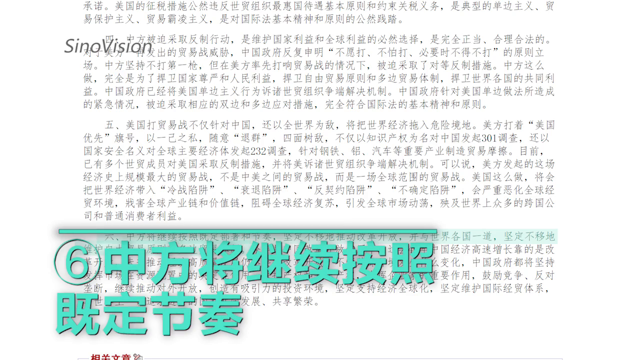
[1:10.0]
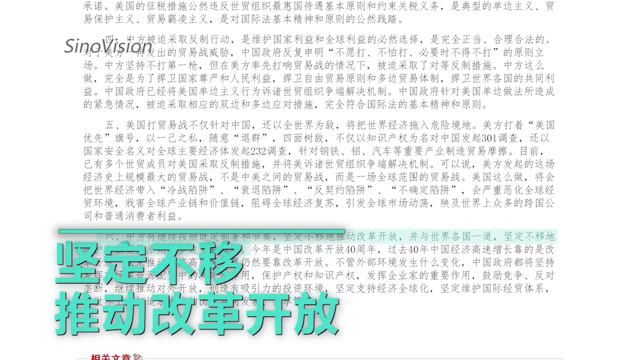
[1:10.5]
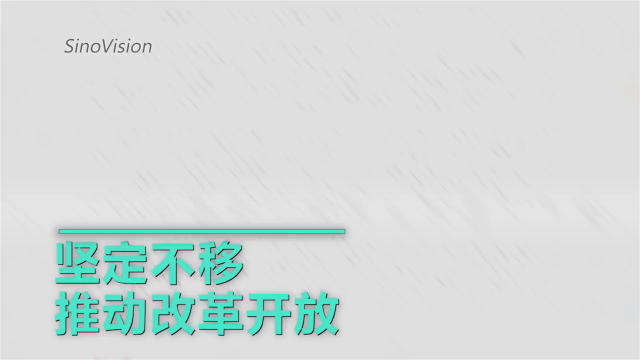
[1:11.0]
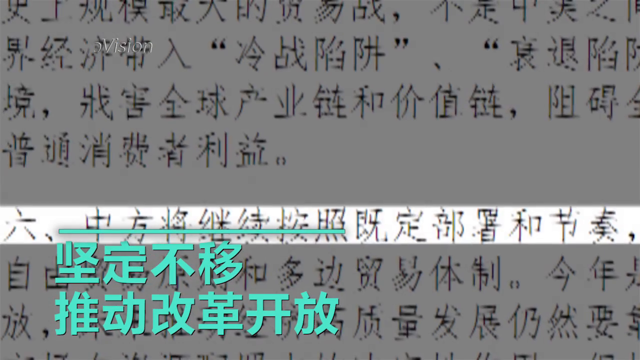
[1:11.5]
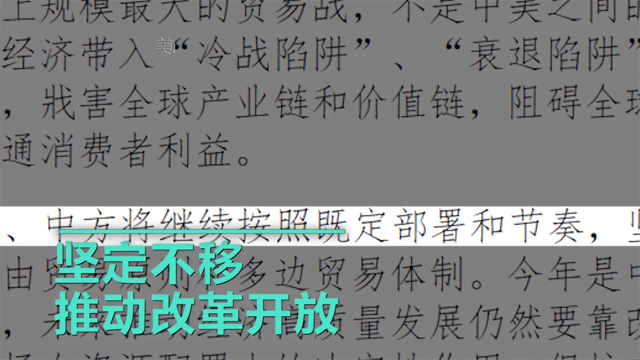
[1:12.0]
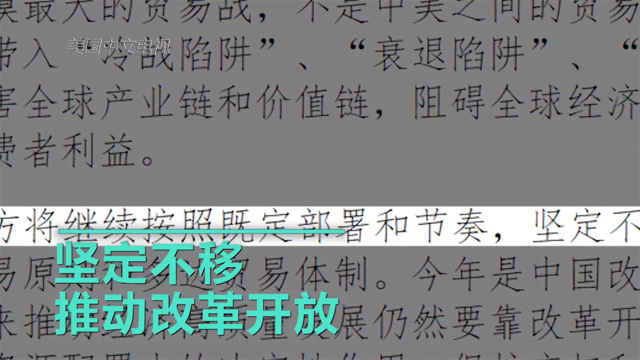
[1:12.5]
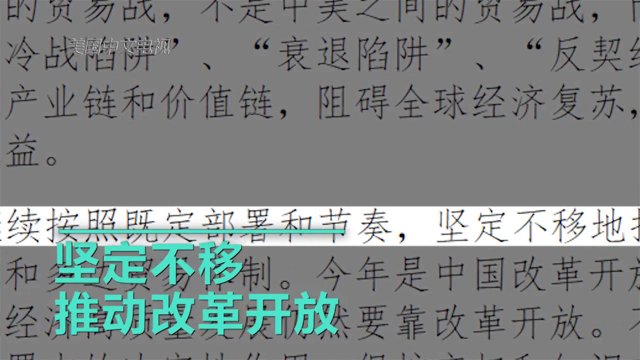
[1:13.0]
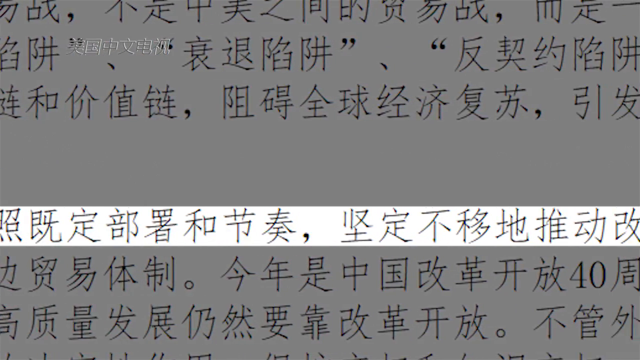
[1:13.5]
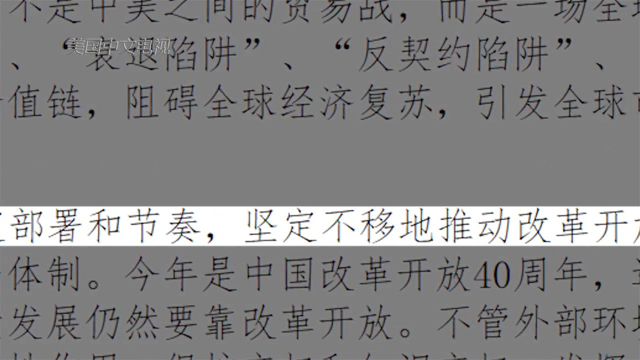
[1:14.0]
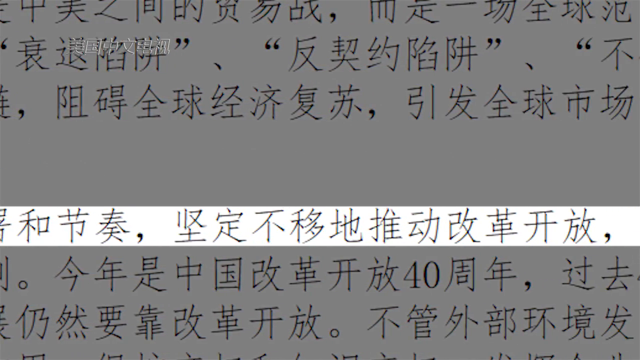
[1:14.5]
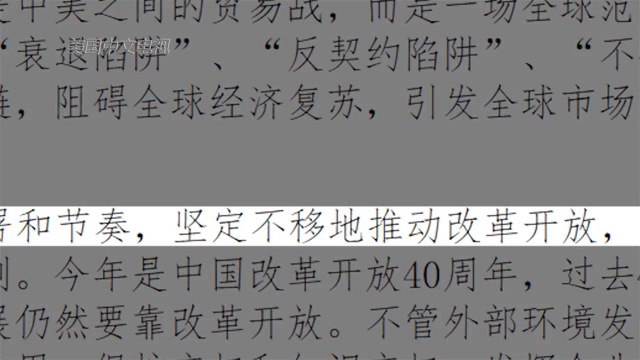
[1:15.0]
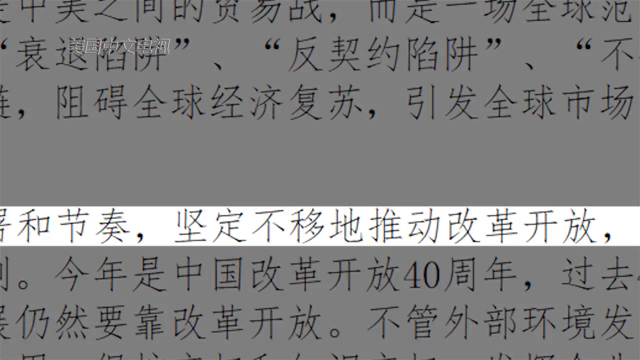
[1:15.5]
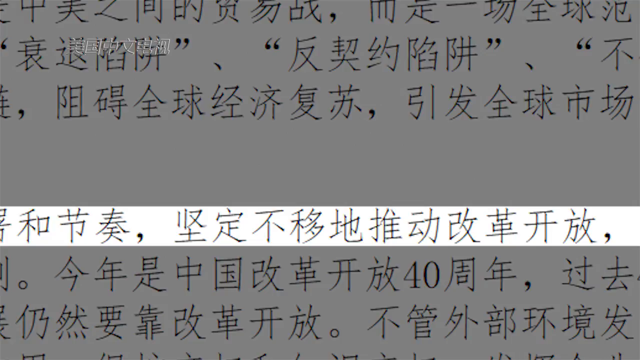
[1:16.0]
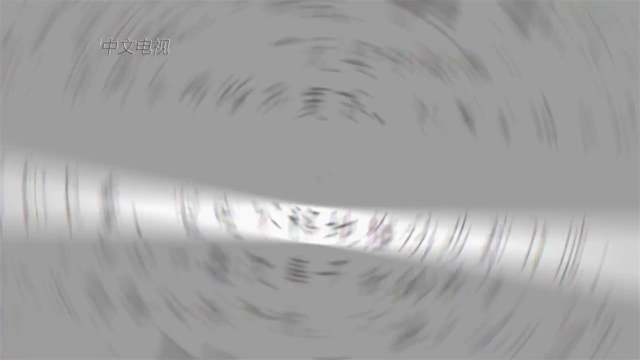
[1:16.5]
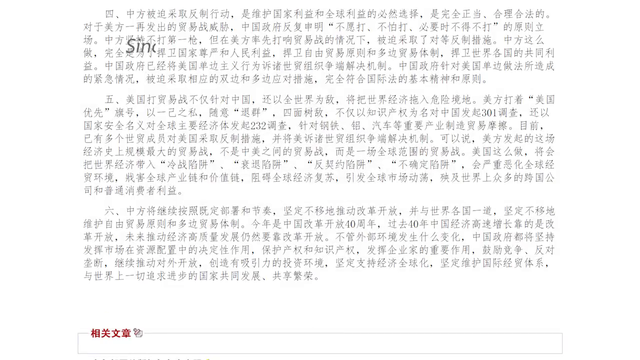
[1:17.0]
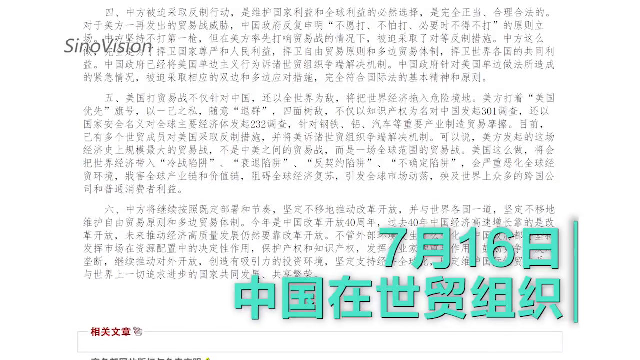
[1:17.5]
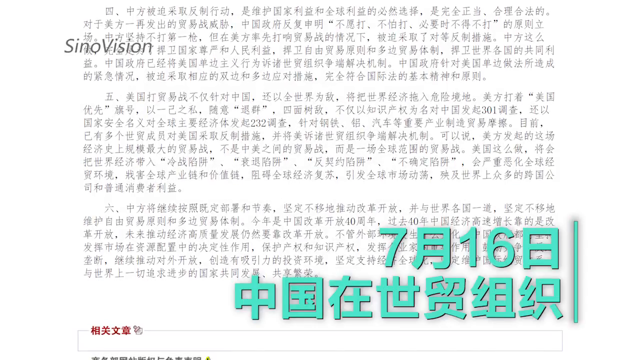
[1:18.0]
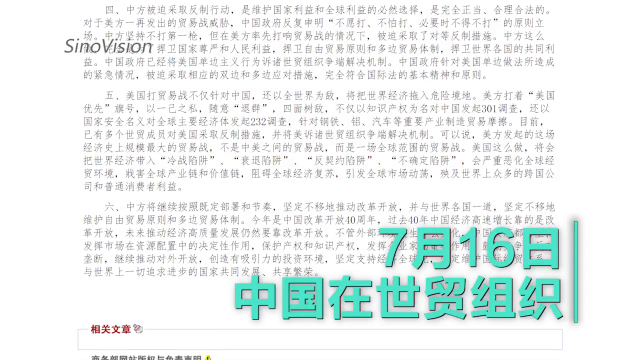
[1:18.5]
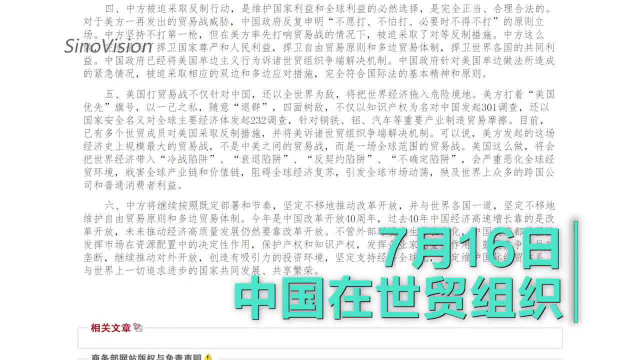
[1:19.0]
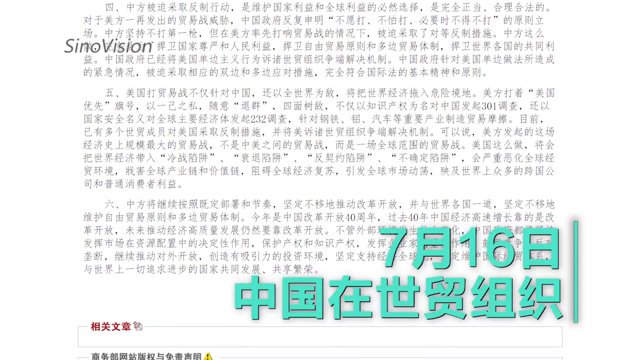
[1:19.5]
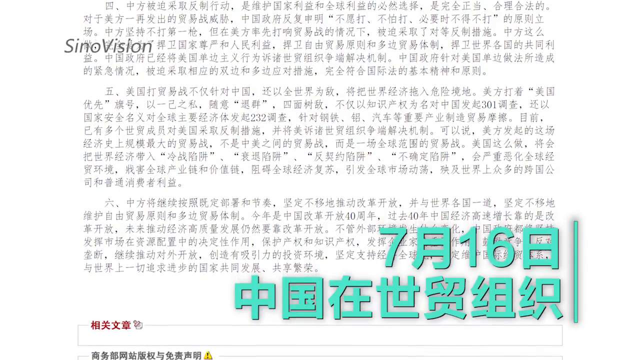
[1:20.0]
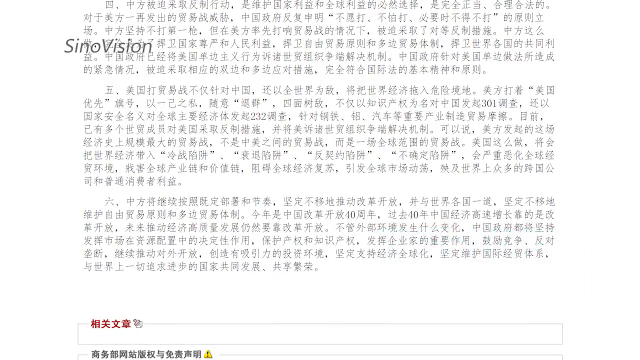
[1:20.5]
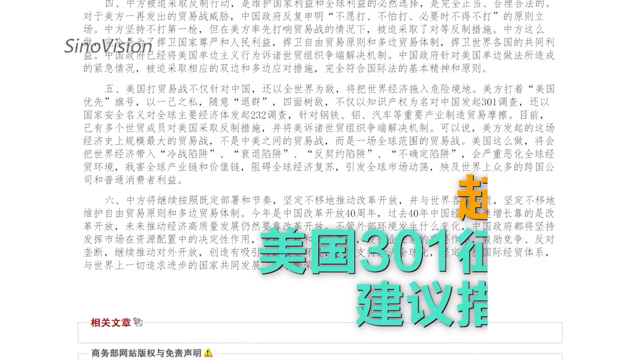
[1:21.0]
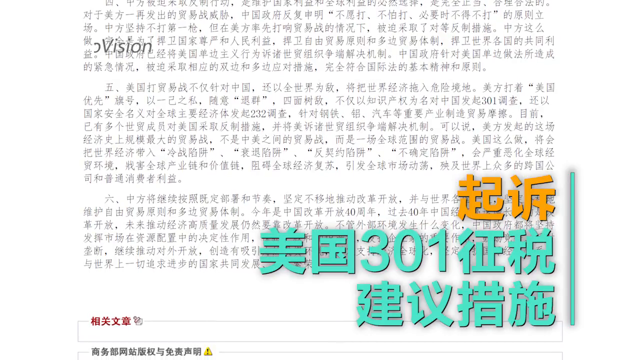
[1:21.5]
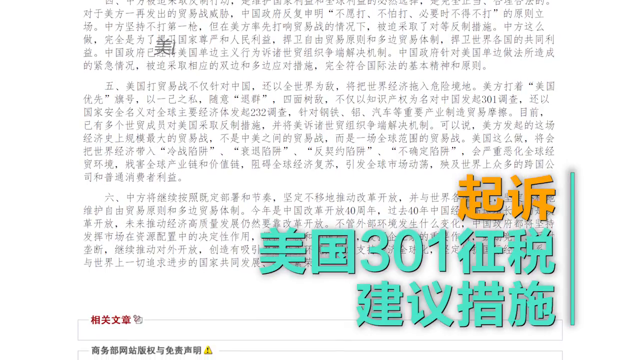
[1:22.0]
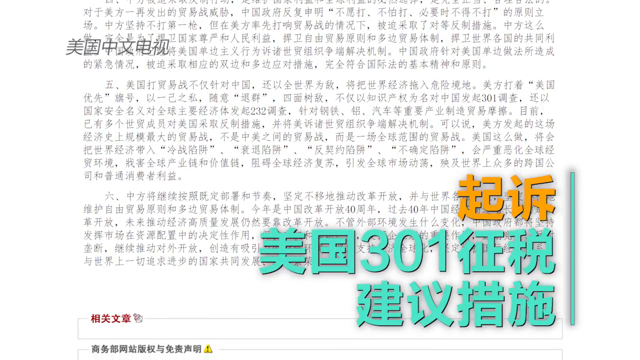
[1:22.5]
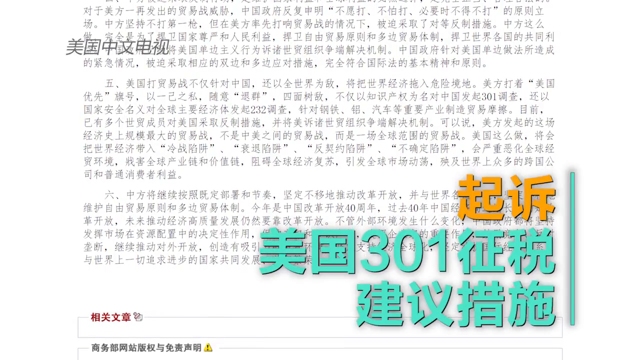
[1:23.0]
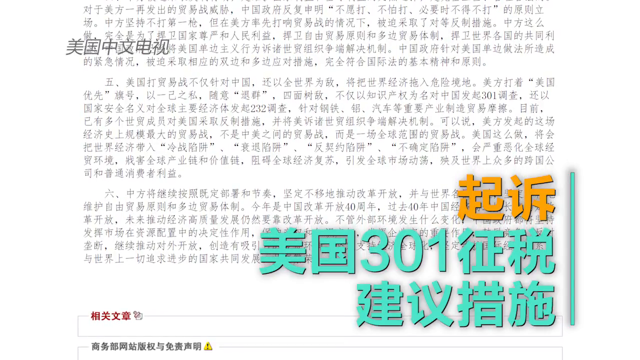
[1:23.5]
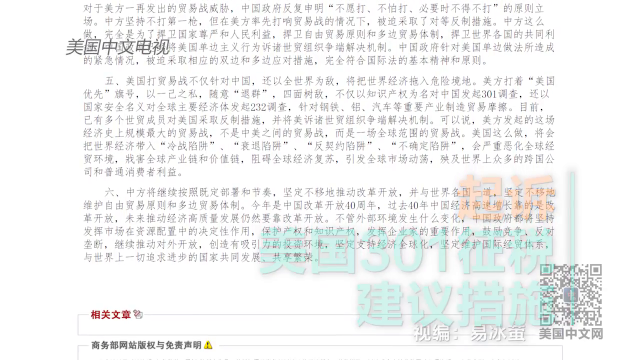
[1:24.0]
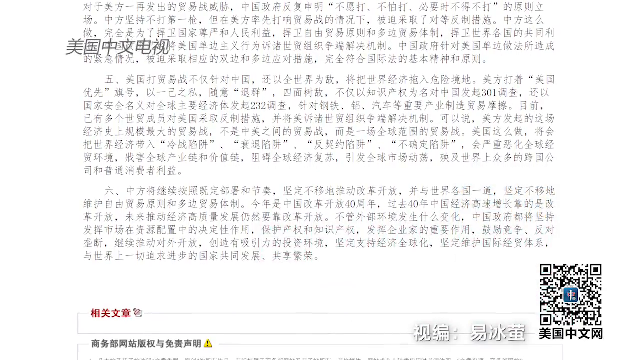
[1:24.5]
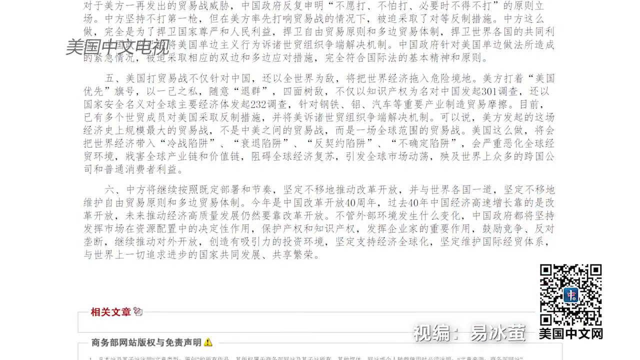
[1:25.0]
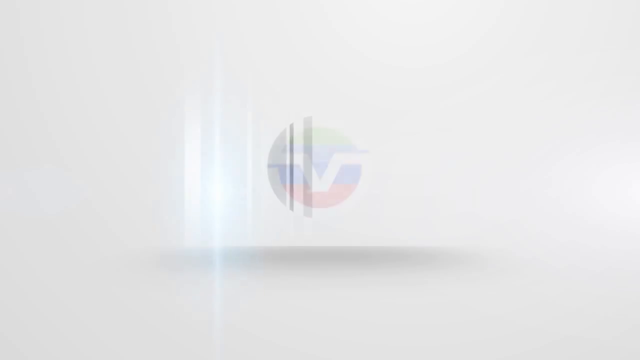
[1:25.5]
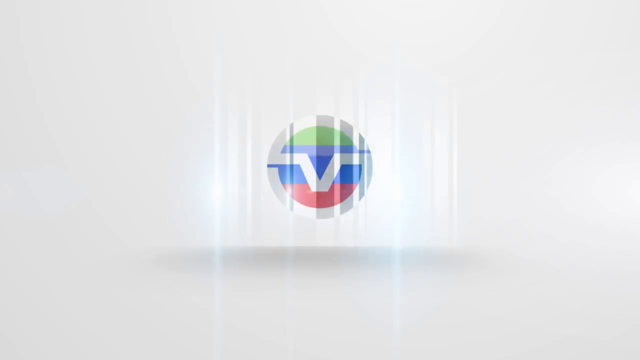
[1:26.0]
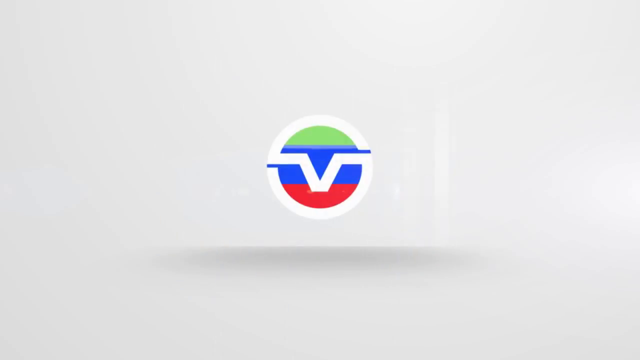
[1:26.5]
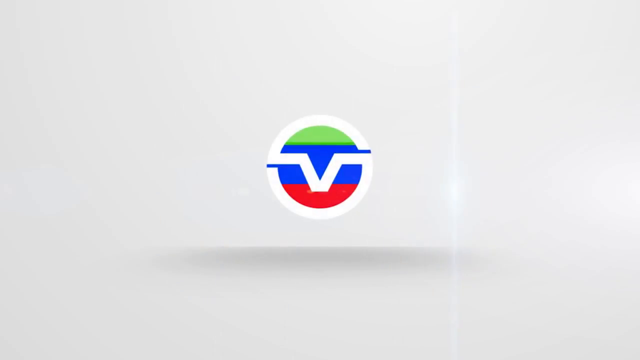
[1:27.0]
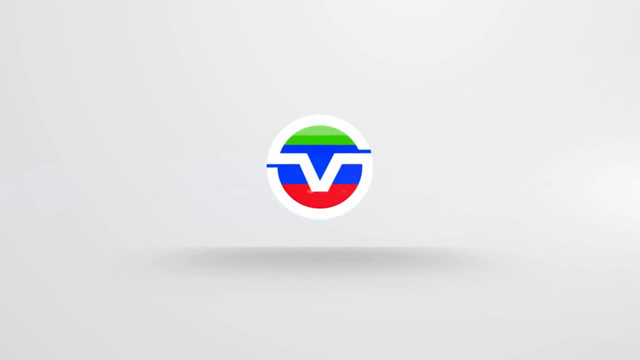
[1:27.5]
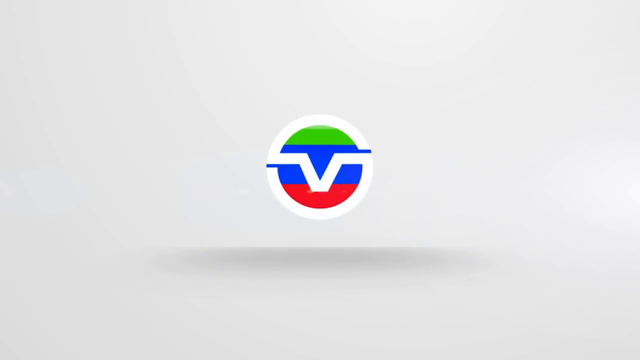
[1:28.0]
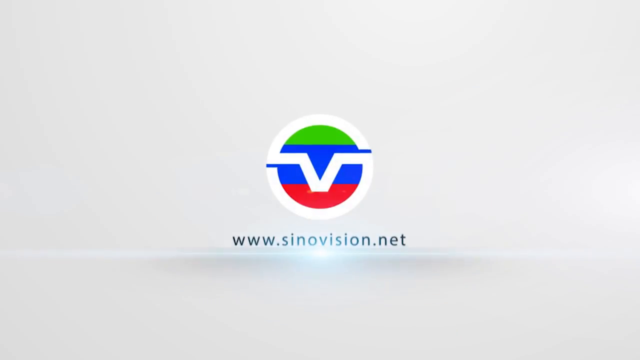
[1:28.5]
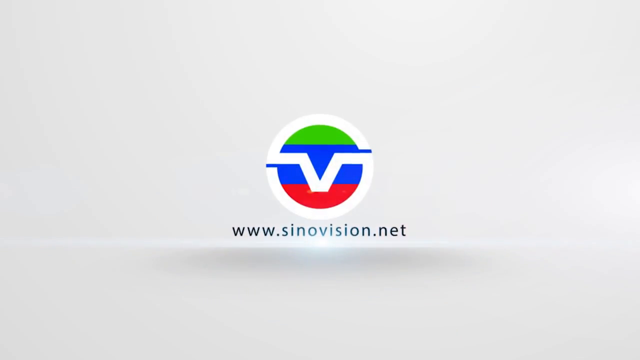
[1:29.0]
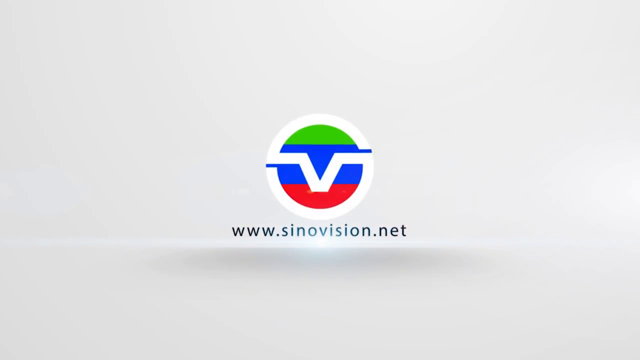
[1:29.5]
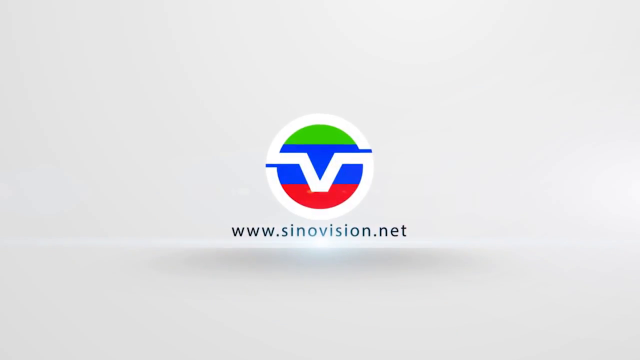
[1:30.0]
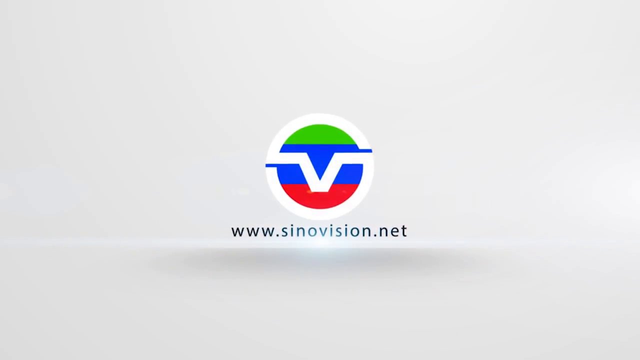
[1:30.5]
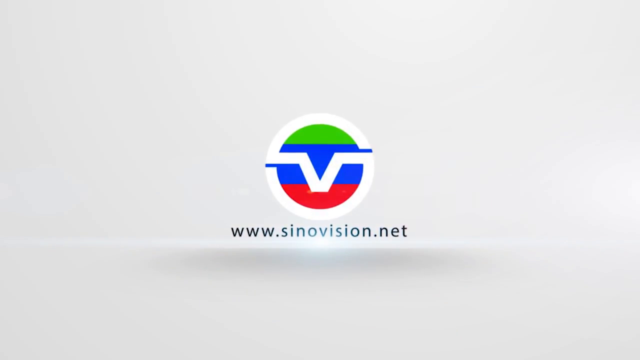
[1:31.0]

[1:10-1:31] The view is focused on the number six, and highlighting comes in on a row within the paragraphs of Chinese text. When it is enlarged, the number 301 is visible. A website reading "www.cinovision.net" then appears alongside an emblem showing a capital letter V that extends outward around a circle; the top of the circle is green, the middle blue and the bottom red, and the whole outer part of the circle is white. At the end only the website remains, and the middle of the word Cinovision almost seems to be glowing.